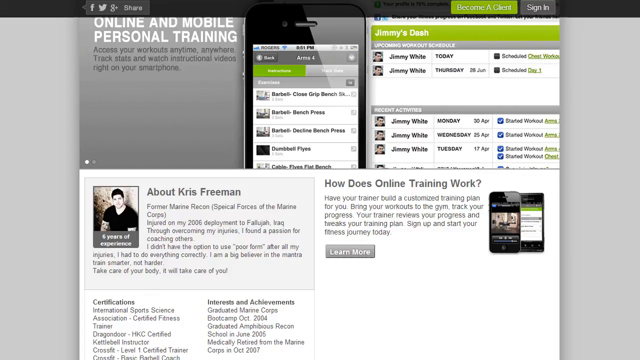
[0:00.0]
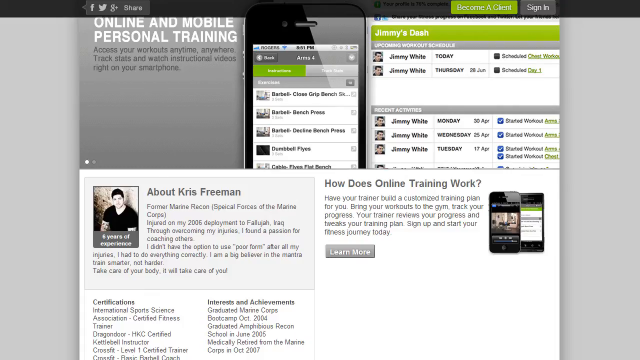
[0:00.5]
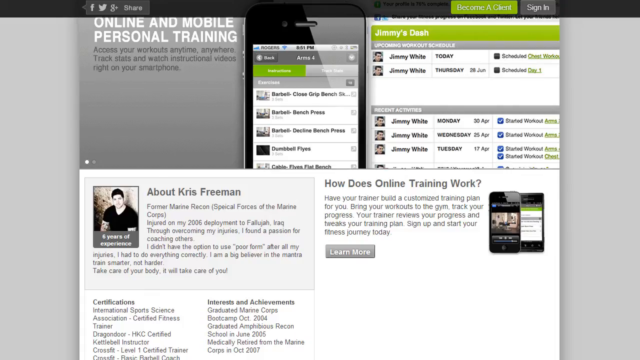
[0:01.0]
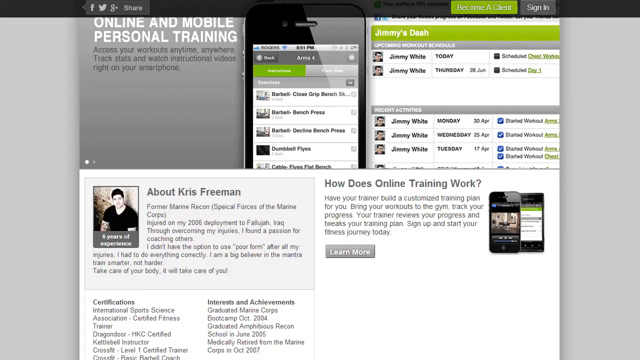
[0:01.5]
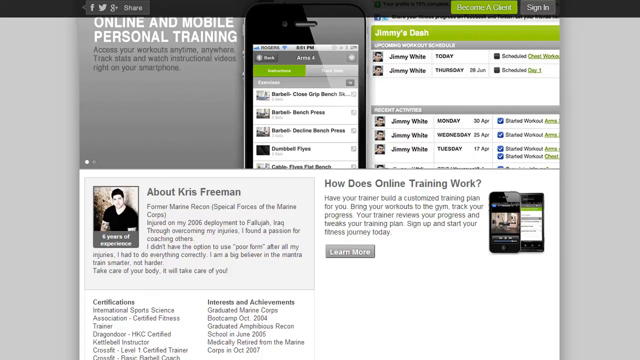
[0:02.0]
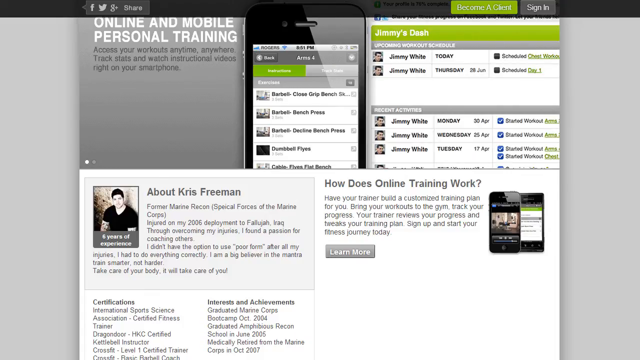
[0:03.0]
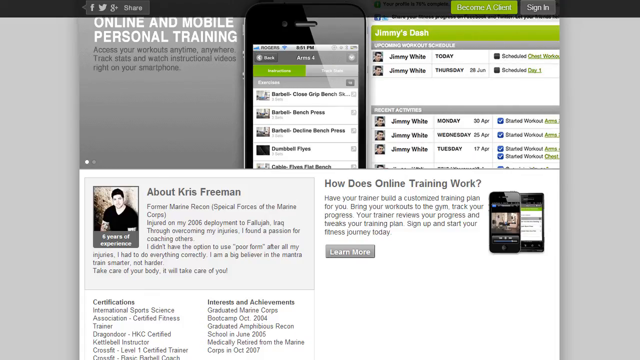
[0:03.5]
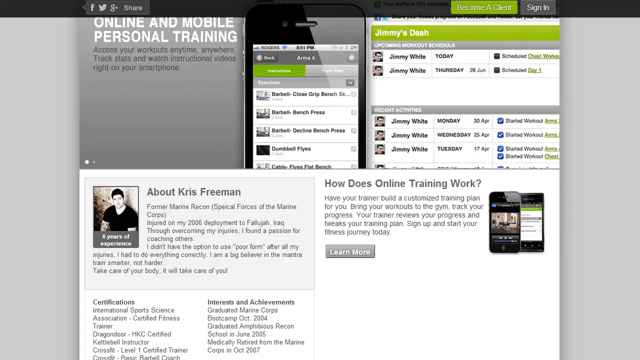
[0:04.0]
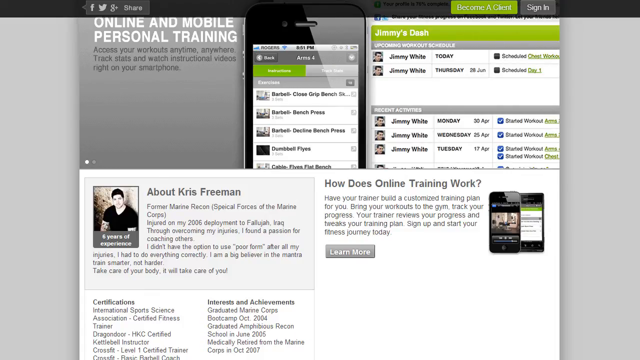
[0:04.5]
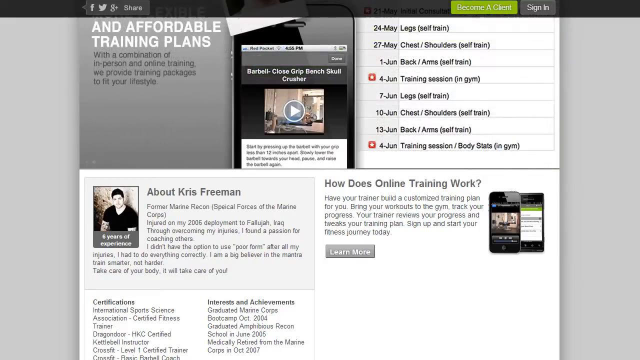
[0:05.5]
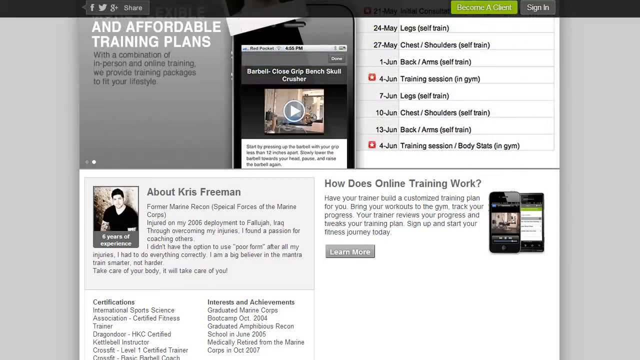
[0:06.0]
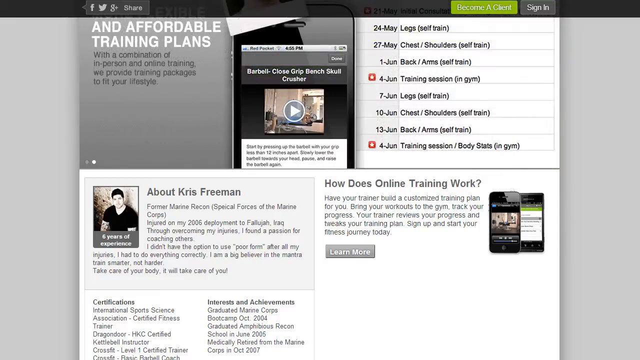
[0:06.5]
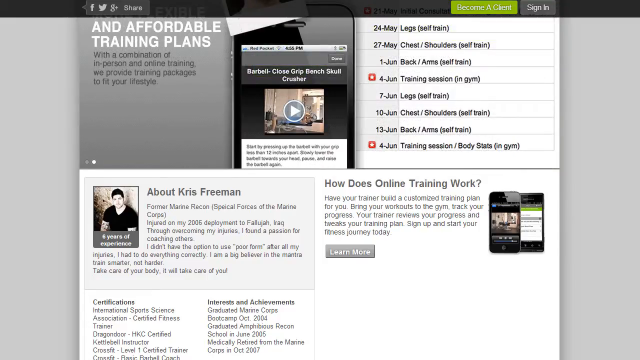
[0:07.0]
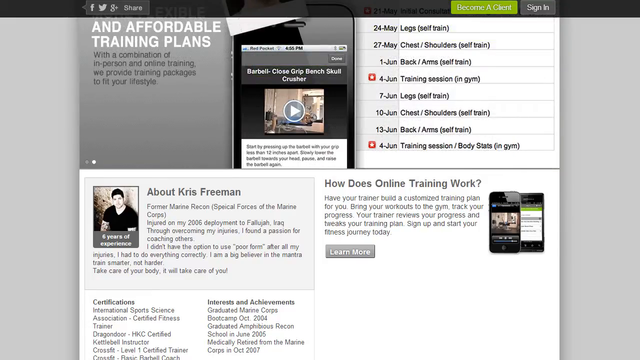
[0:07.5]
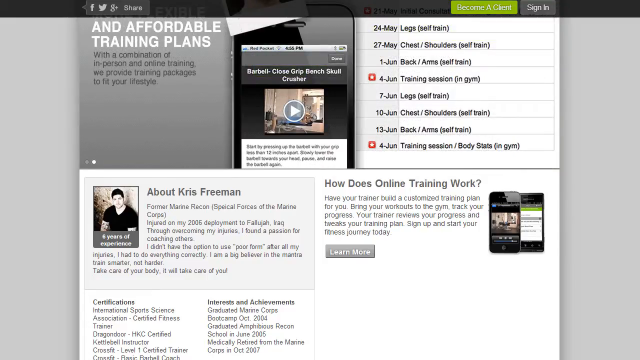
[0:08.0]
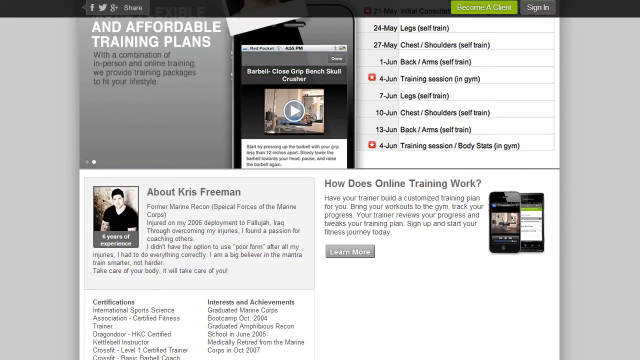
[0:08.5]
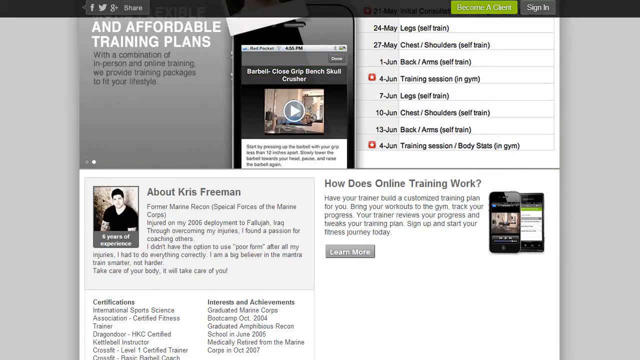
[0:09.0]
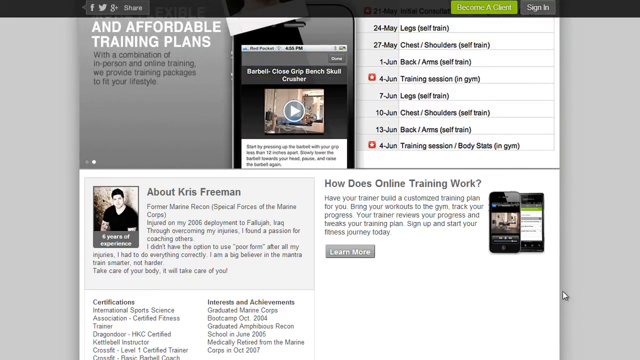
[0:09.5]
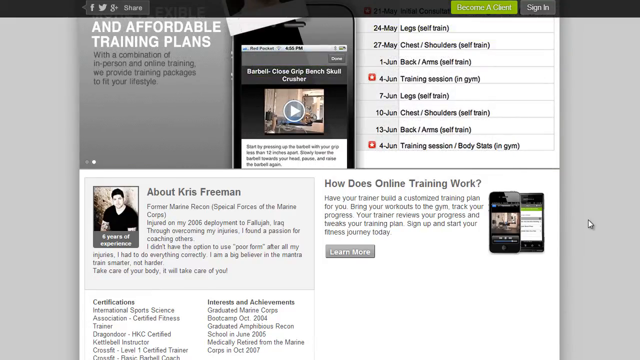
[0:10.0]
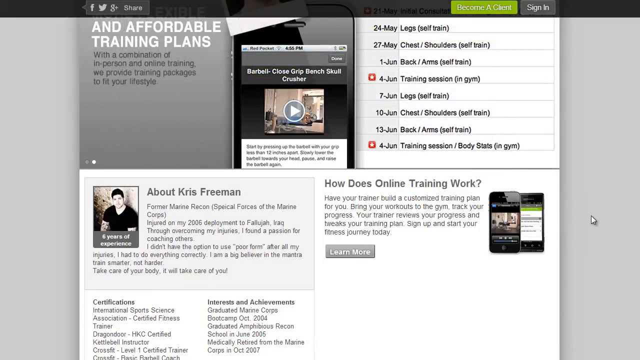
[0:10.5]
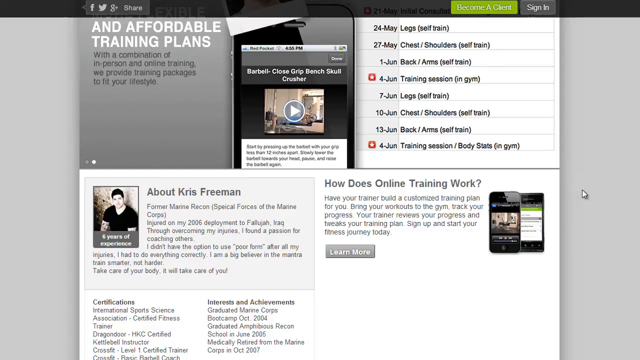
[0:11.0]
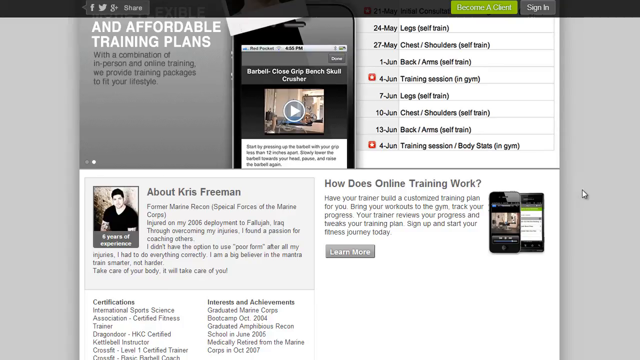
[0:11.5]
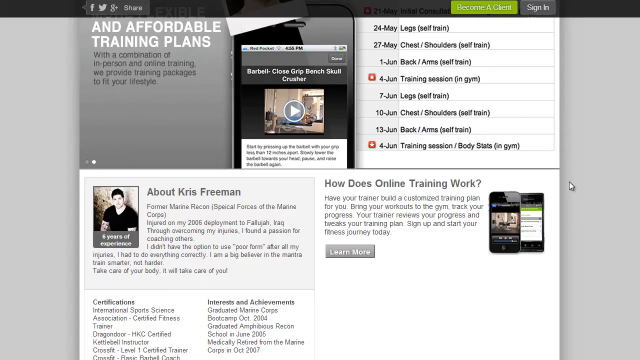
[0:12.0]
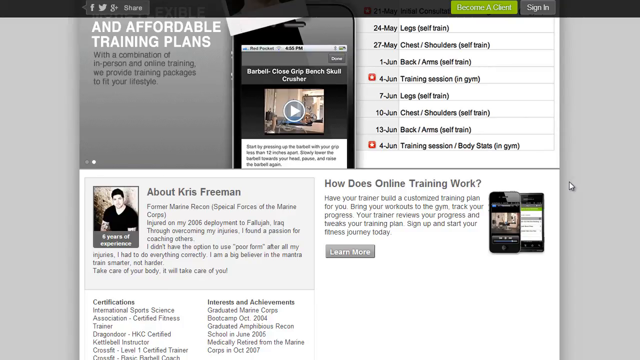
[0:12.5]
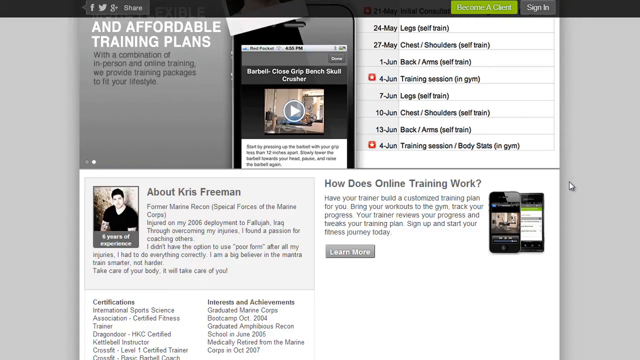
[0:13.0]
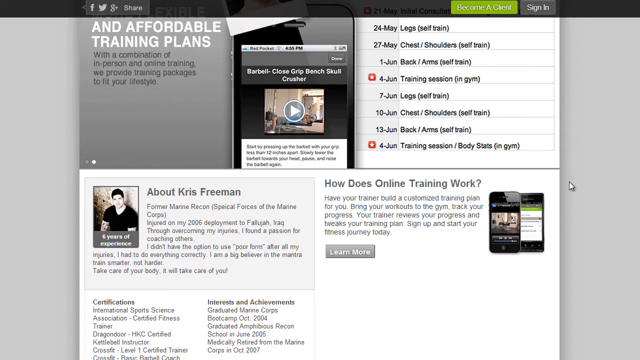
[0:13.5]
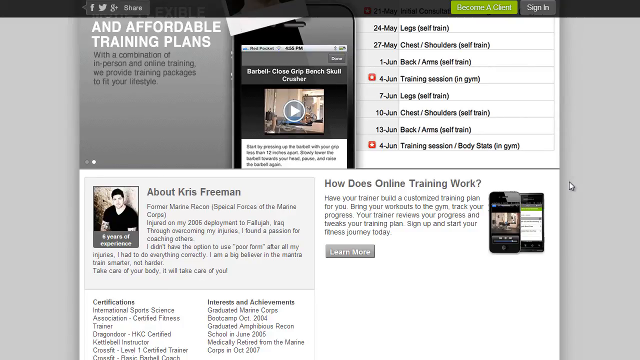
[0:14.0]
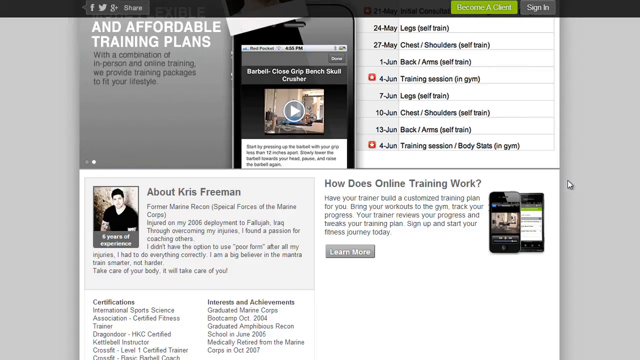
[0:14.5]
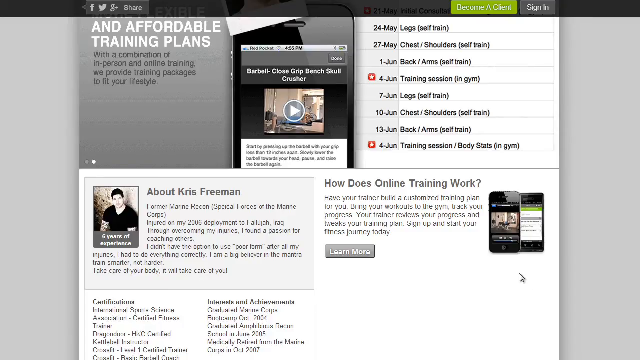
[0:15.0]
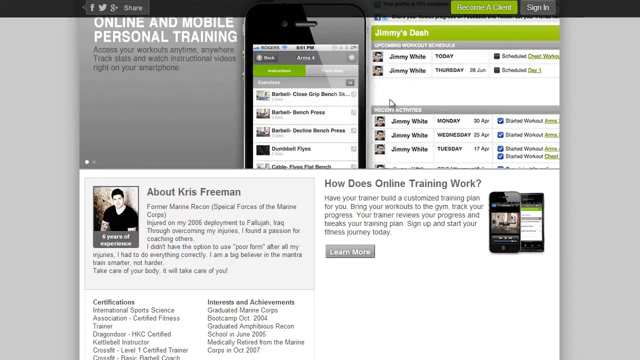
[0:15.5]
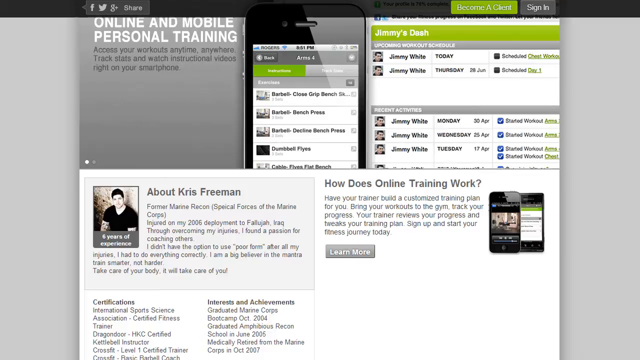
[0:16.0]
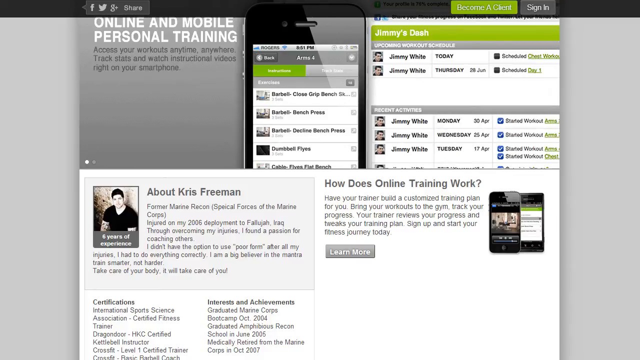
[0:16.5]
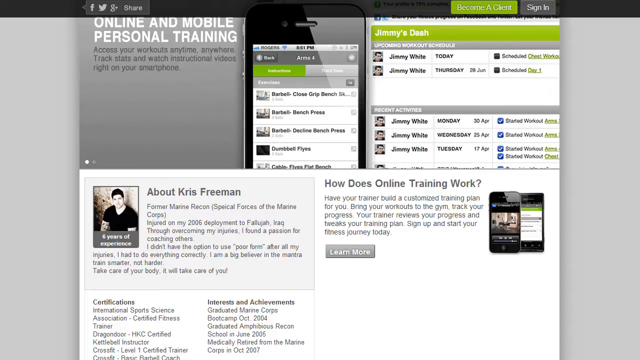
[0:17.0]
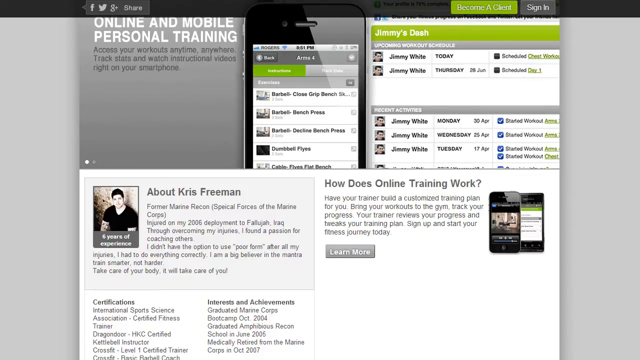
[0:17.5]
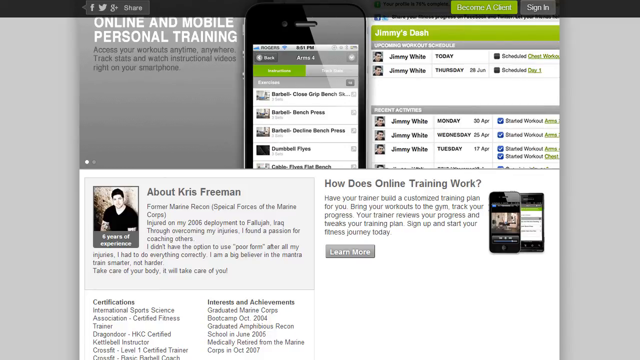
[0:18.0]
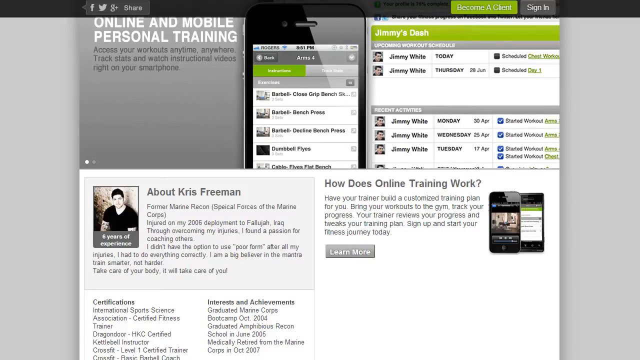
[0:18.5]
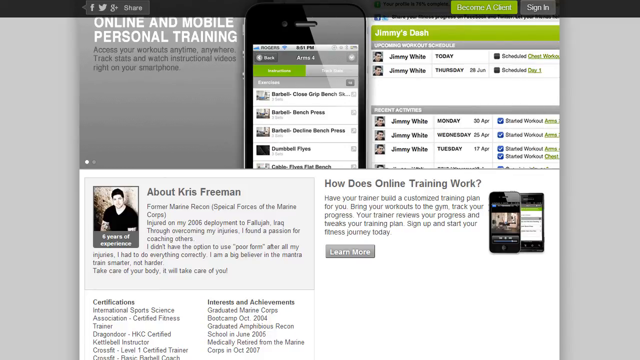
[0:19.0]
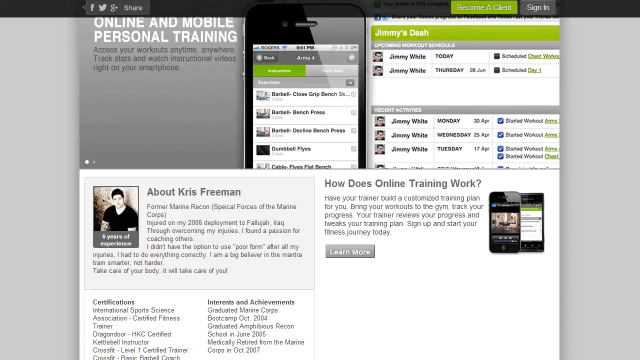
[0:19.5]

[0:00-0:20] A screen shows a smaller computer screen divided into five smaller screens. The top left-hand section is gray, and at its top it reads "Online and Mobile Personal Training. With this, you'll work out anytime, anywhere, track stats, and watch instructional videos right on your smartphone." To the right is a picture of a smartphone displaying a website that is too small to make out. Further right is another small screen with a green stripe at the very top reading "Jimmy's Dash"; beneath it a gray stripe reads "upcoming workout schedule," followed by "Jimmy White today" and "Jimmy White Thursday." In the bottom right-hand section, the top left corner holds a picture of a man with black hair in a black short-sleeved shirt, visible from the chest up, and to the right of the picture the top of the section reads "Chris Freeman." To the right of that is another small section headed "how does online training work?"